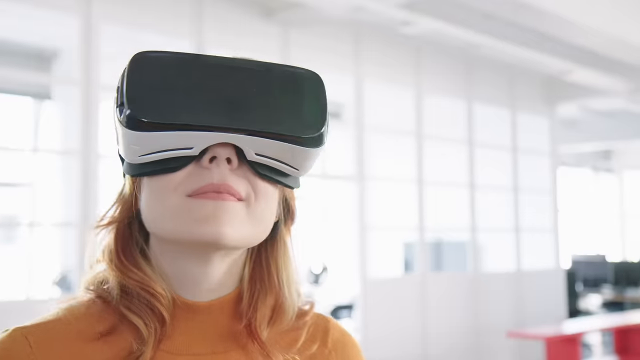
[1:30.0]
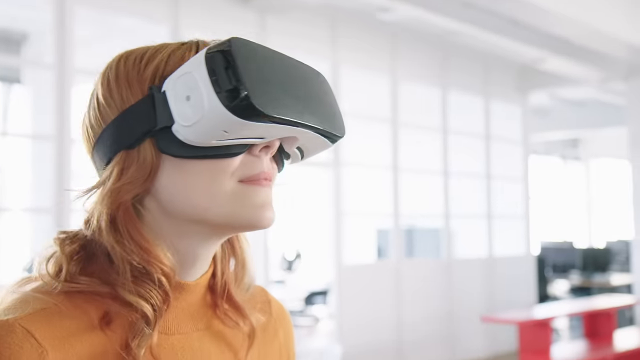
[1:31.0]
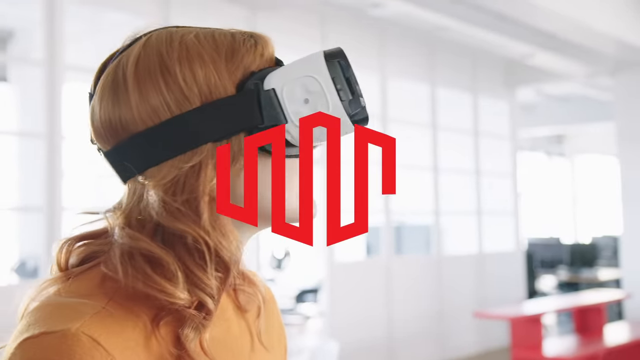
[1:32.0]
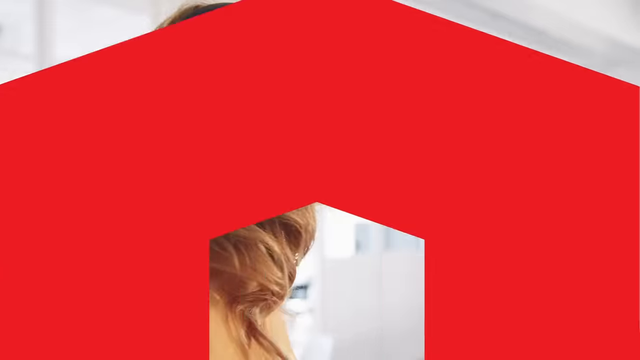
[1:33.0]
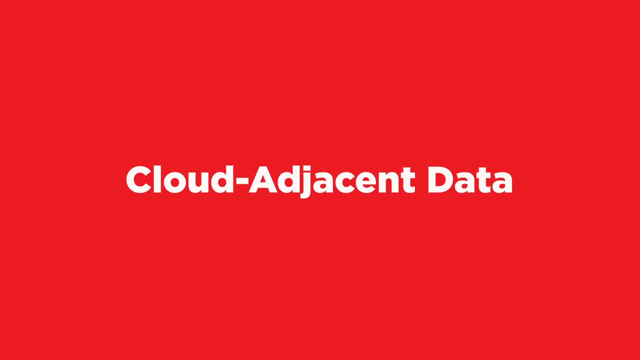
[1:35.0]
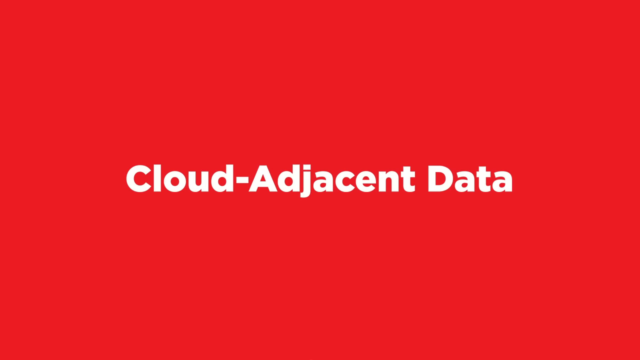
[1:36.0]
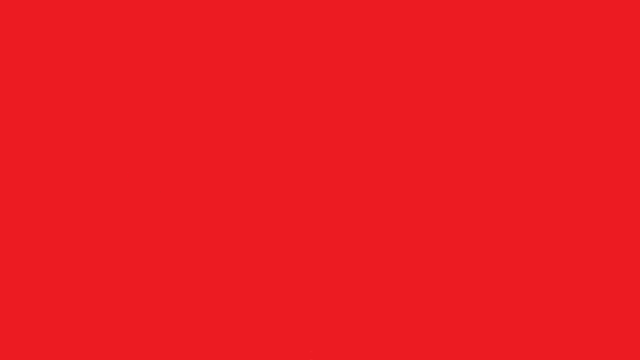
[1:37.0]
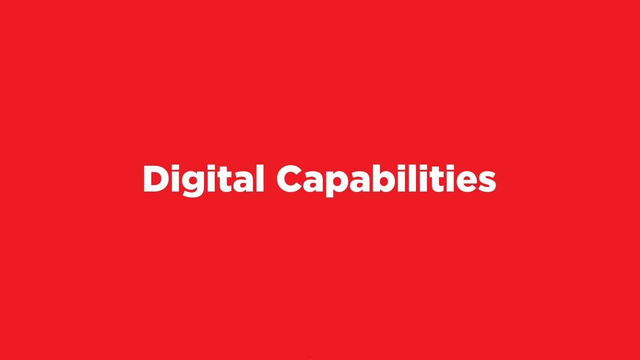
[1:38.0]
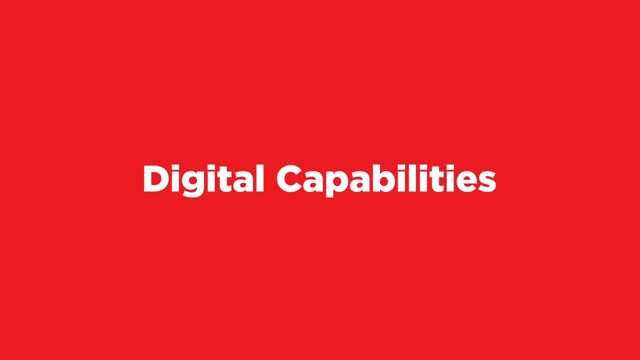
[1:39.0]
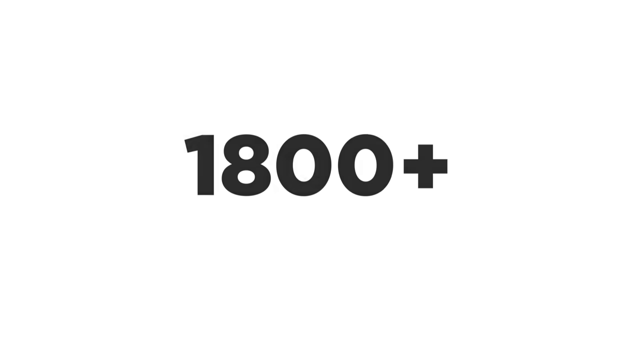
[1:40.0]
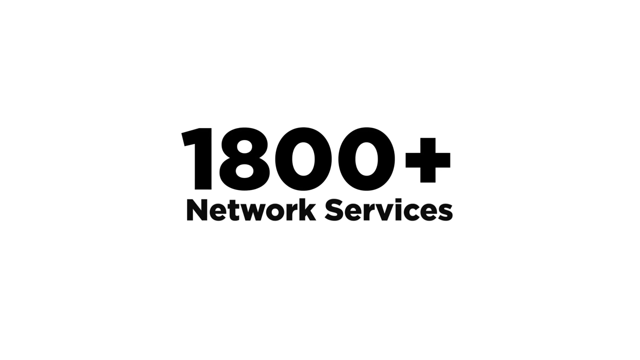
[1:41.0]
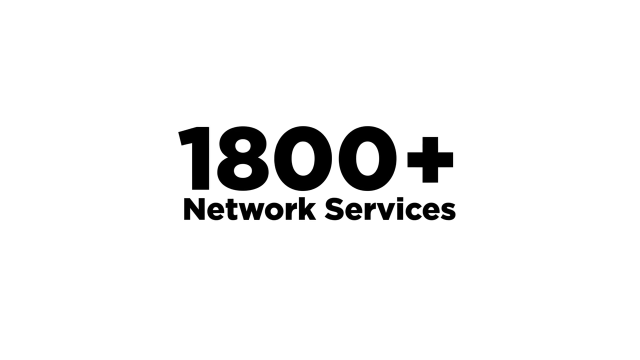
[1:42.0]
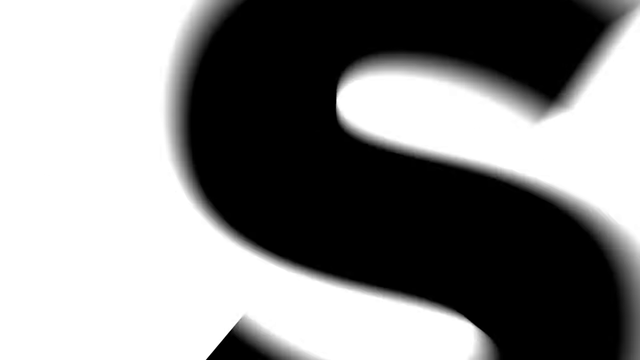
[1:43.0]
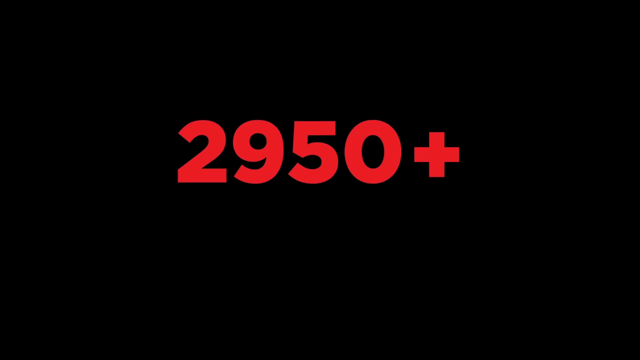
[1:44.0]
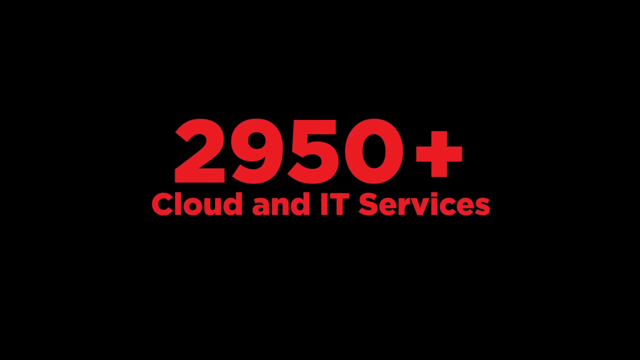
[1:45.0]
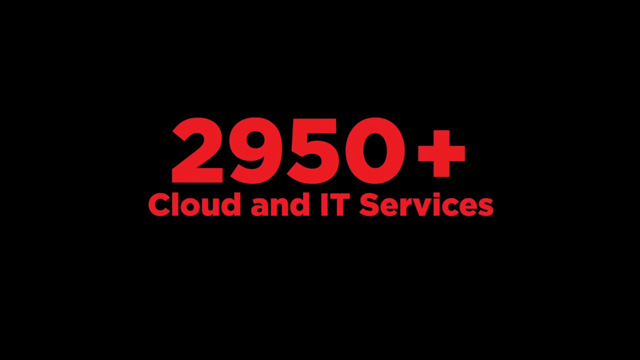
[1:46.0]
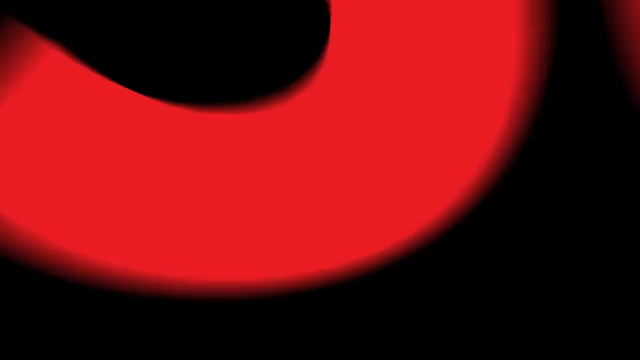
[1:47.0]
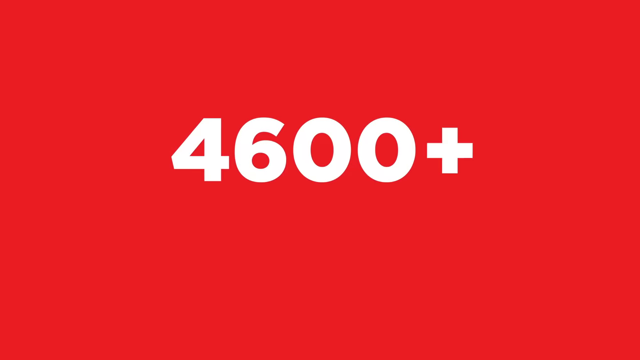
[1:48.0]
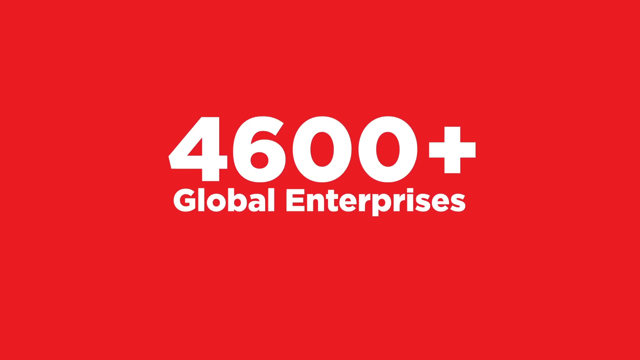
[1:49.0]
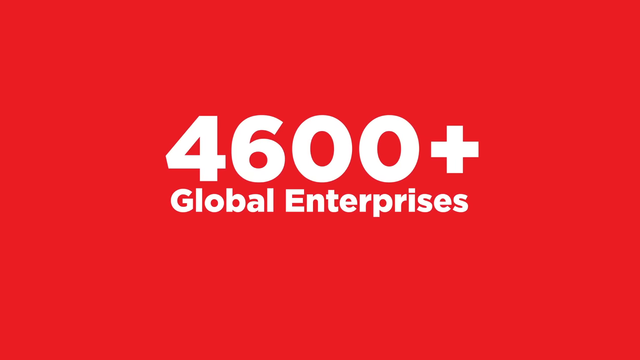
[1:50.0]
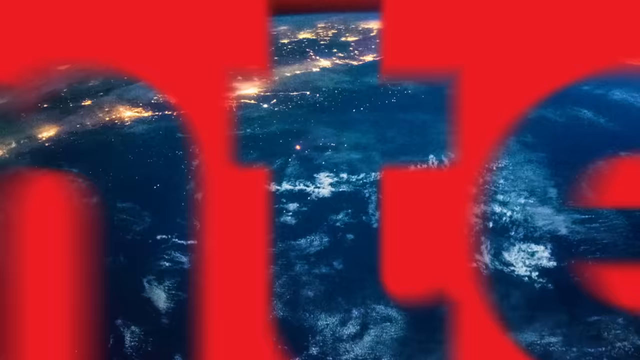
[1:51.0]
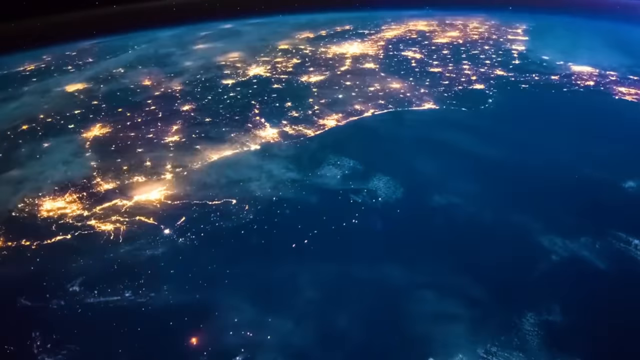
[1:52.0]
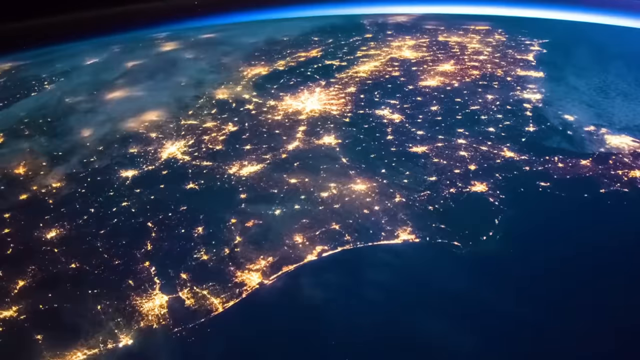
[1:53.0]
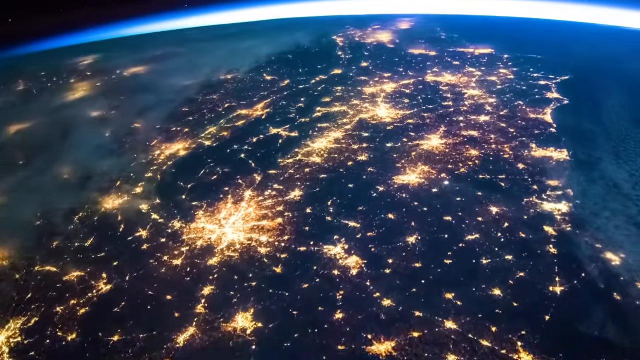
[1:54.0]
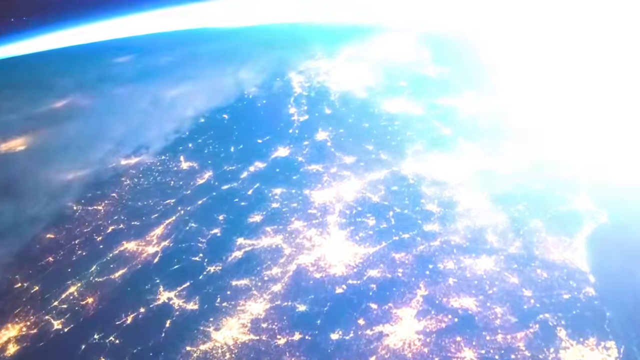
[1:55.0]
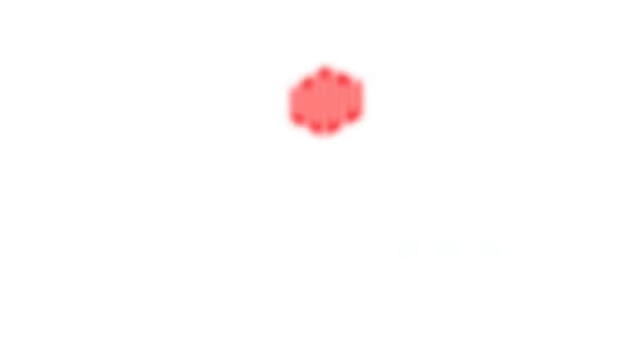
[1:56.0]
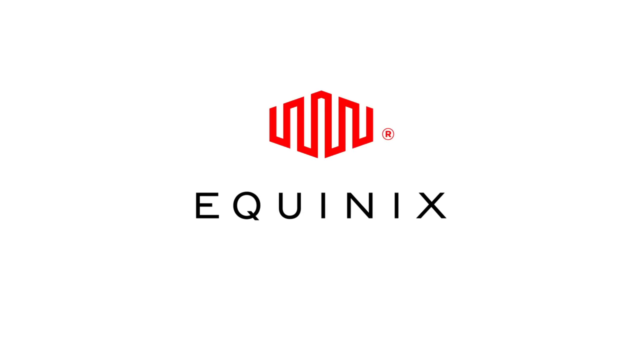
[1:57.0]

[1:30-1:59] The woman with the VR goggles appears, followed by text about a modernized IT system, cloud adjacent data, digital capabilities (in red), 1,800 plus network services, 2,950 cloud and IT services, and 4,600 plus global enterprises. An information superhighway graphic shows lightning and space, with Equinix branding; the advertisement is for Equinix cloud. The cyberspace graphic is like a camera over the earth in space, showing the earth with blue lighting of buildings and electricity, representing the speed at which information moves.